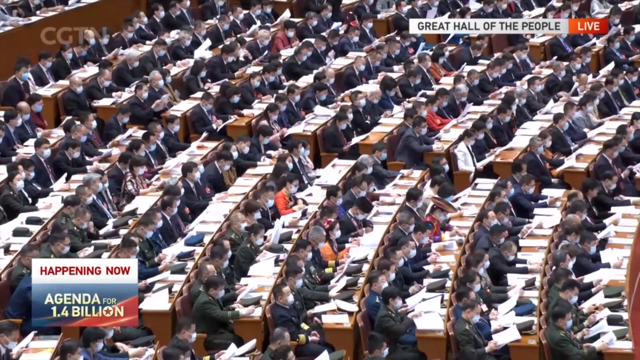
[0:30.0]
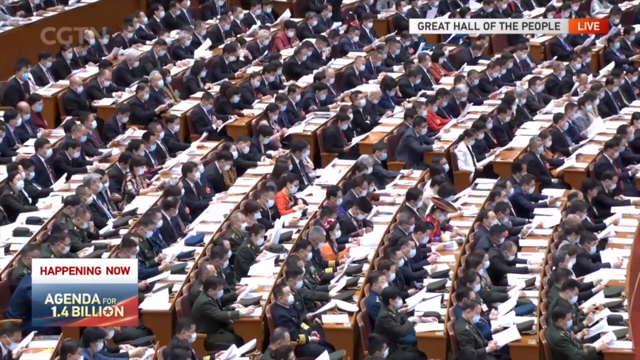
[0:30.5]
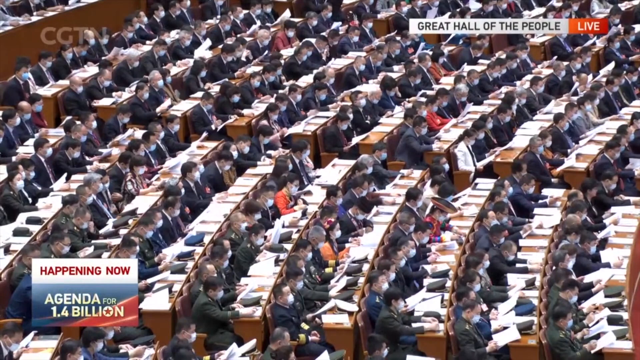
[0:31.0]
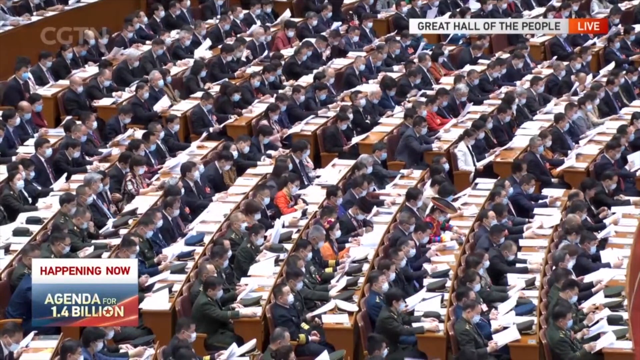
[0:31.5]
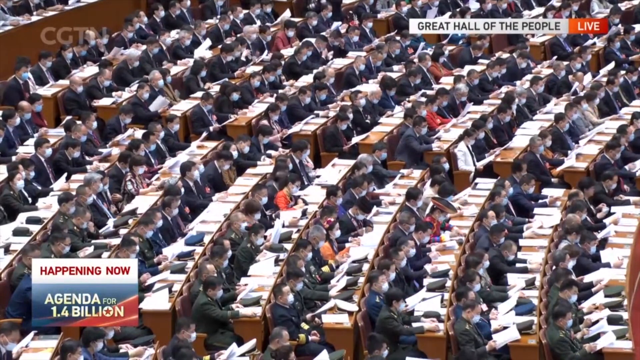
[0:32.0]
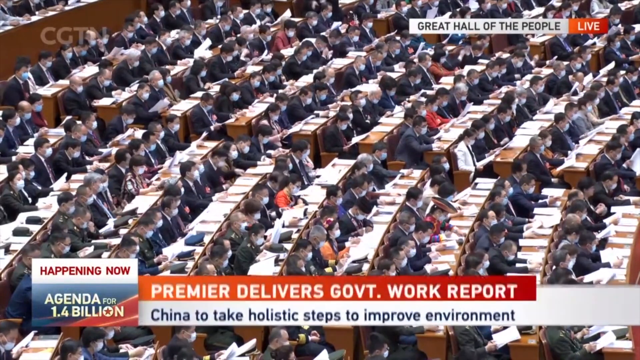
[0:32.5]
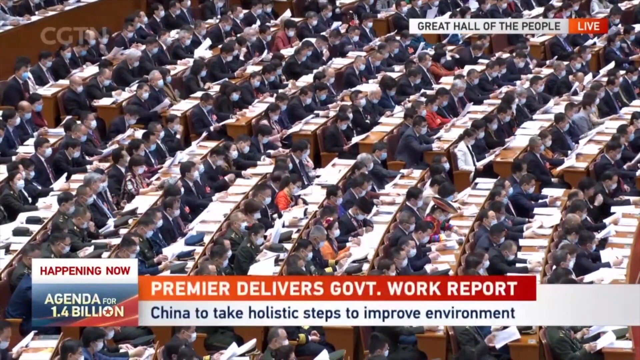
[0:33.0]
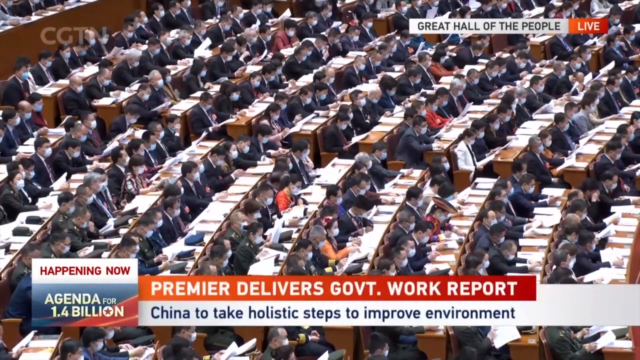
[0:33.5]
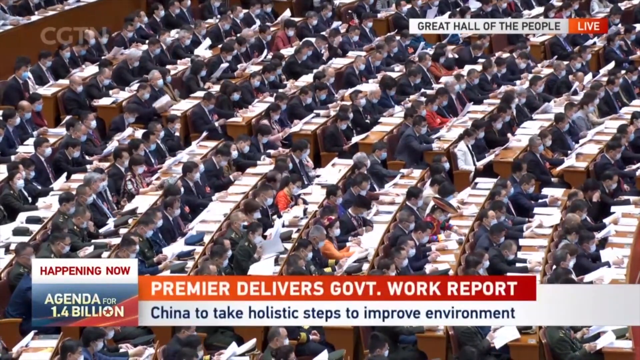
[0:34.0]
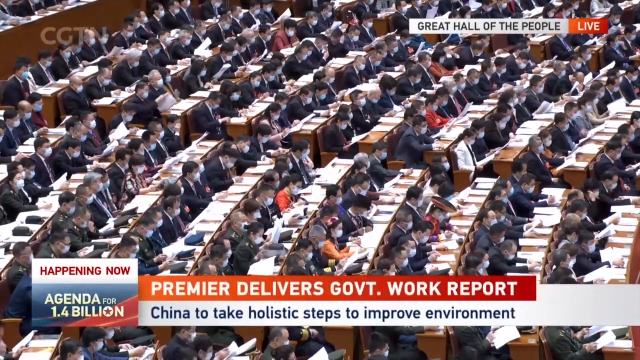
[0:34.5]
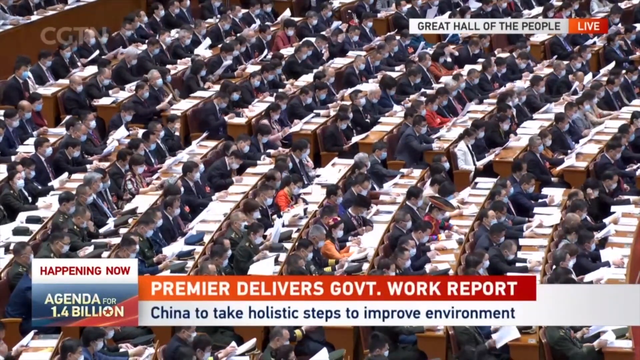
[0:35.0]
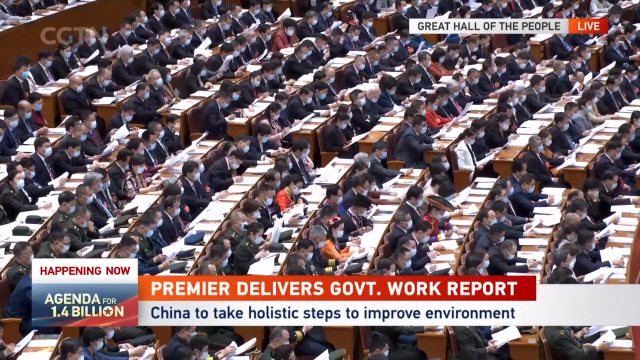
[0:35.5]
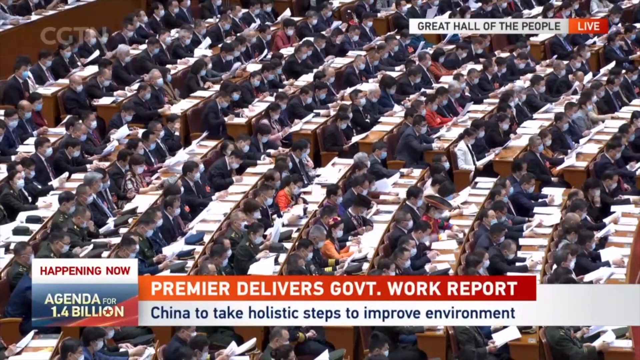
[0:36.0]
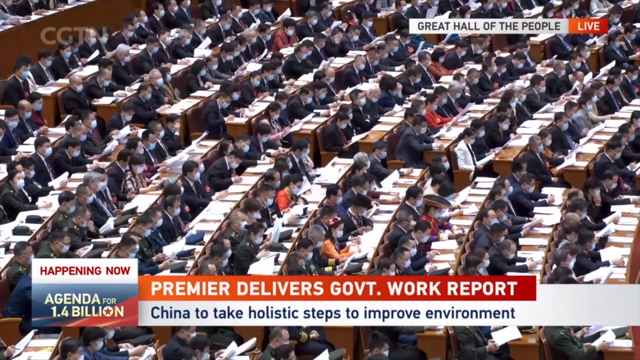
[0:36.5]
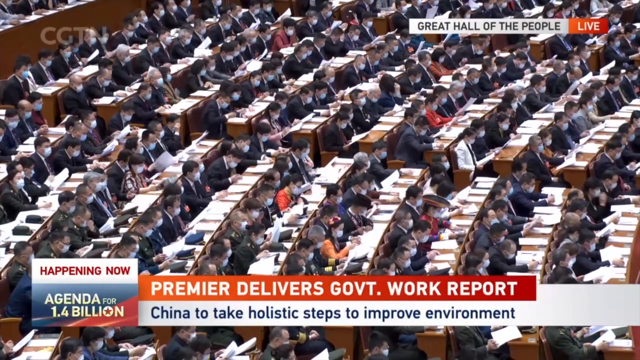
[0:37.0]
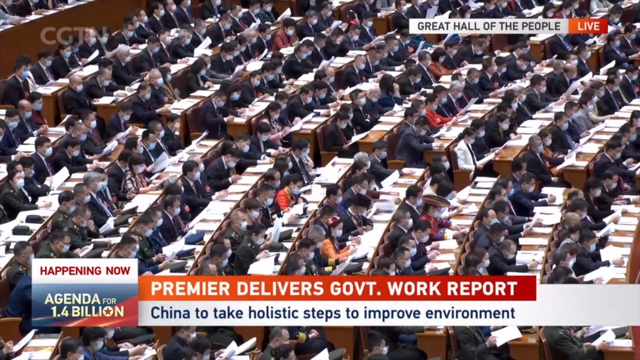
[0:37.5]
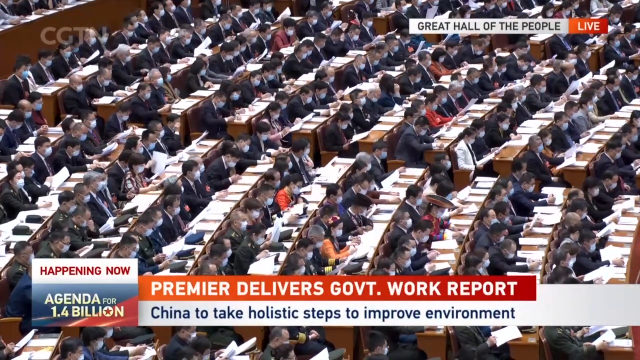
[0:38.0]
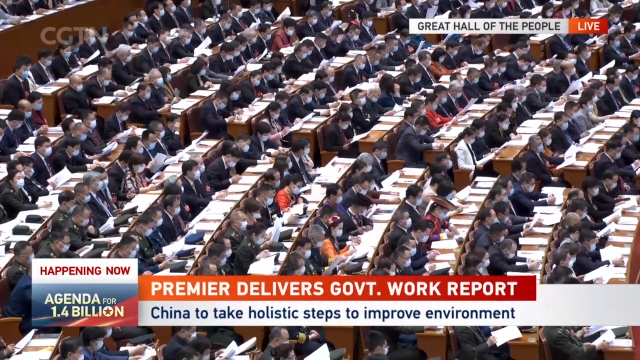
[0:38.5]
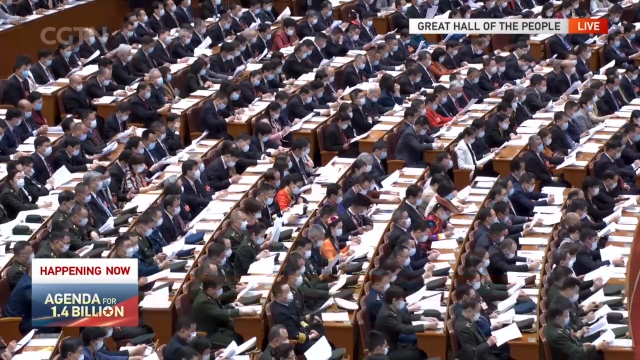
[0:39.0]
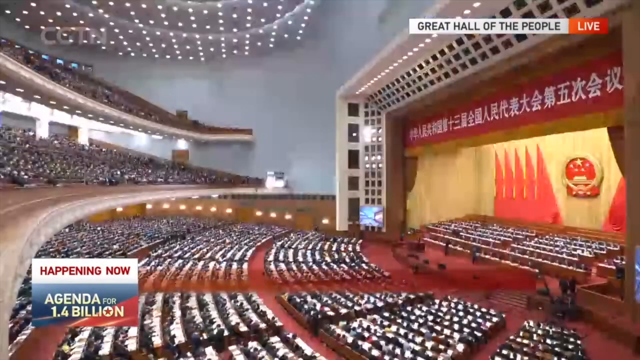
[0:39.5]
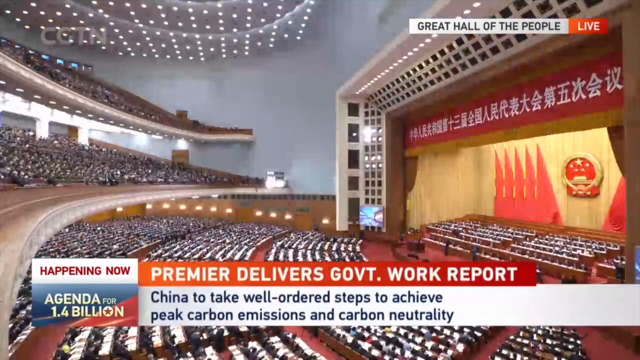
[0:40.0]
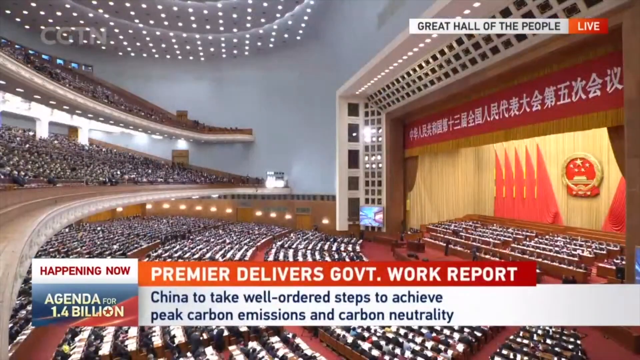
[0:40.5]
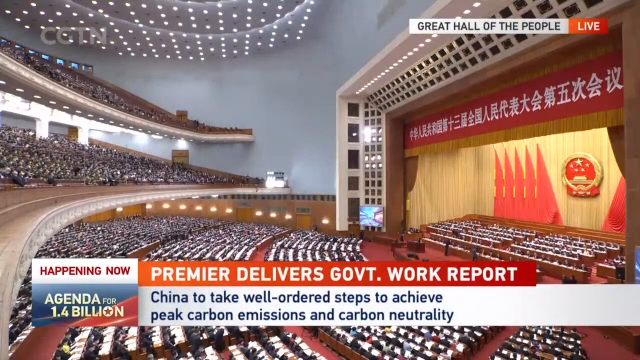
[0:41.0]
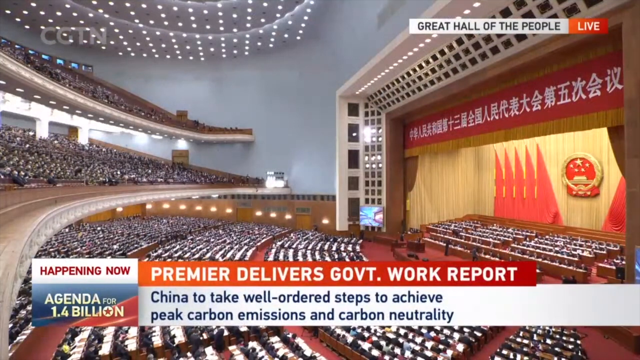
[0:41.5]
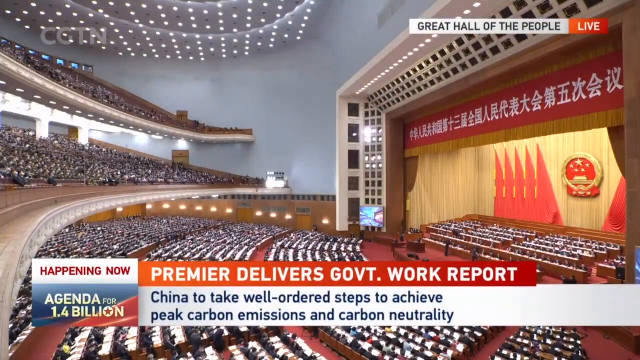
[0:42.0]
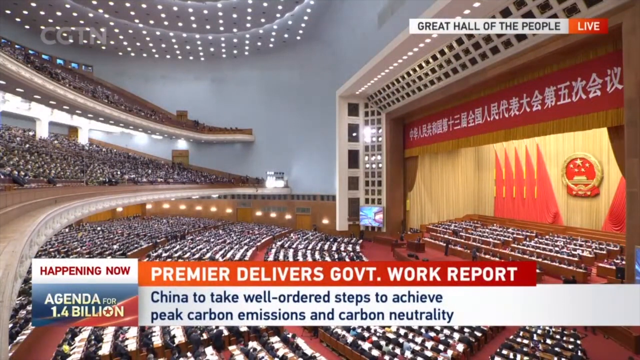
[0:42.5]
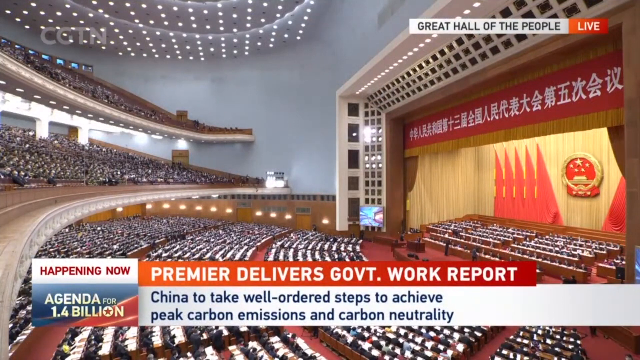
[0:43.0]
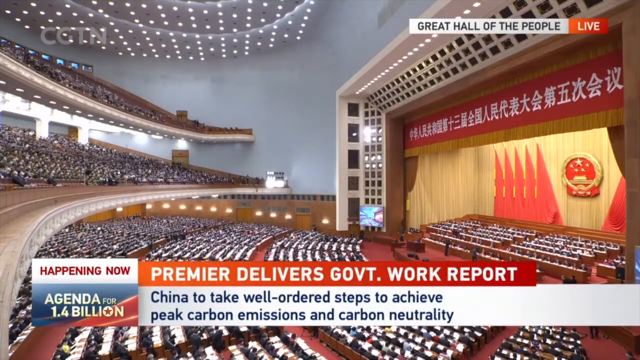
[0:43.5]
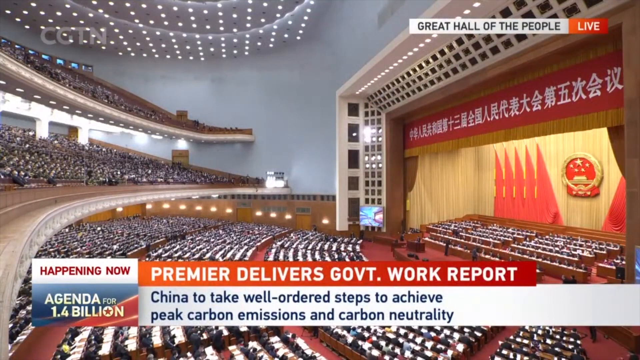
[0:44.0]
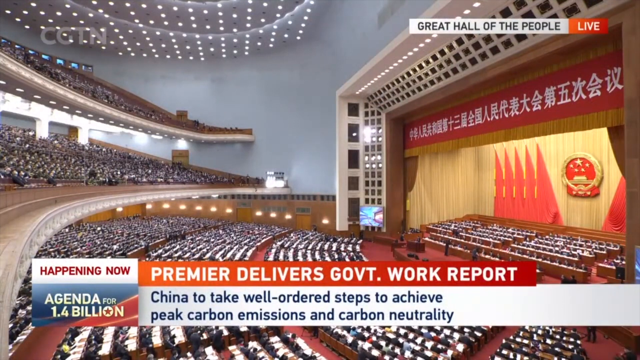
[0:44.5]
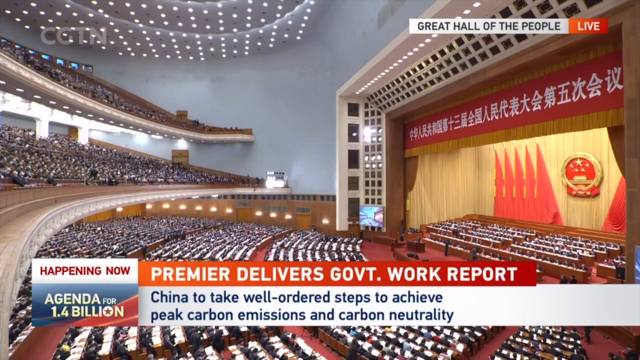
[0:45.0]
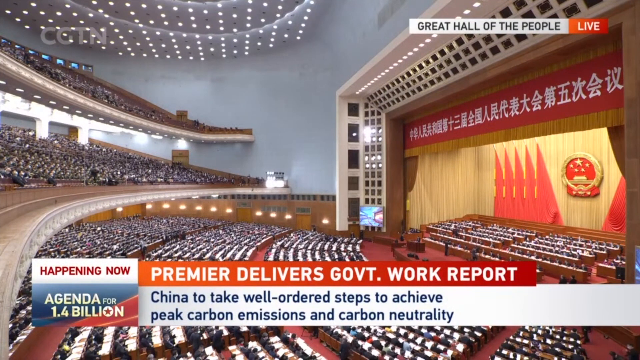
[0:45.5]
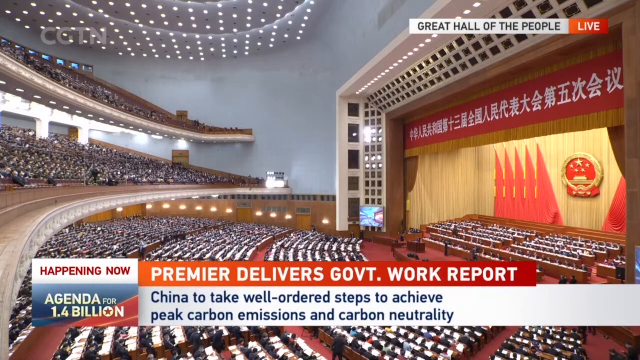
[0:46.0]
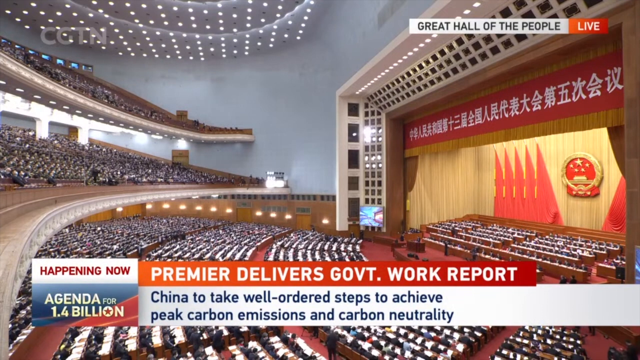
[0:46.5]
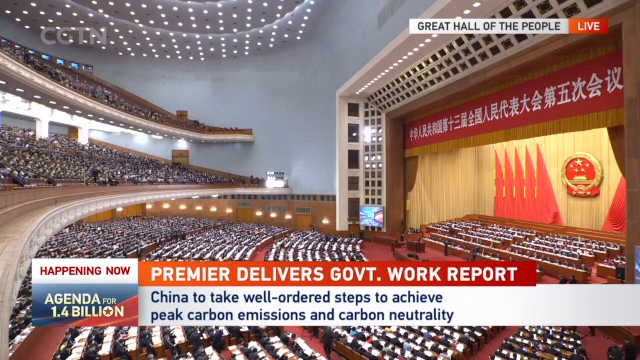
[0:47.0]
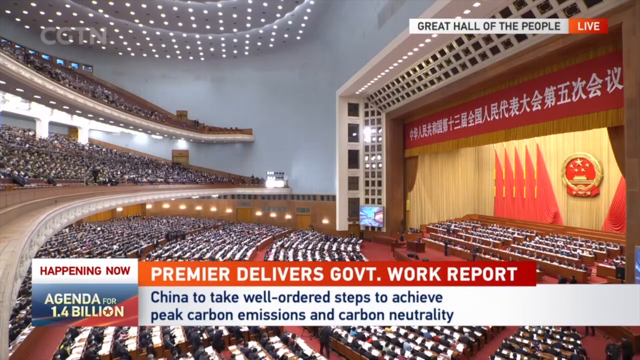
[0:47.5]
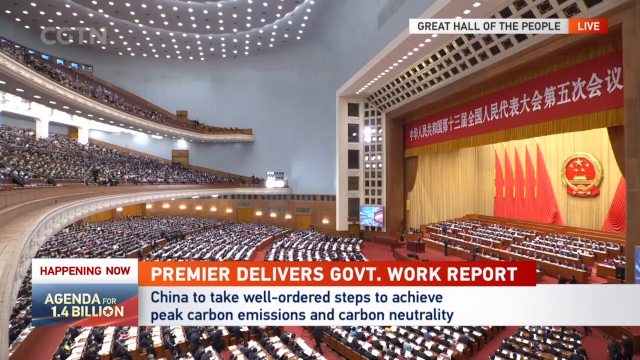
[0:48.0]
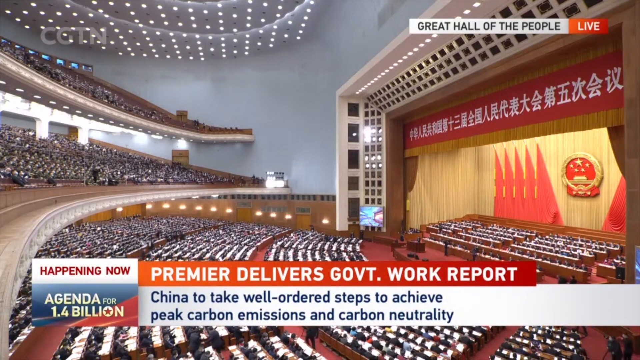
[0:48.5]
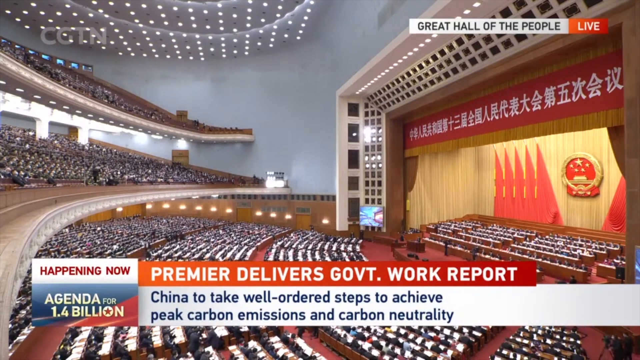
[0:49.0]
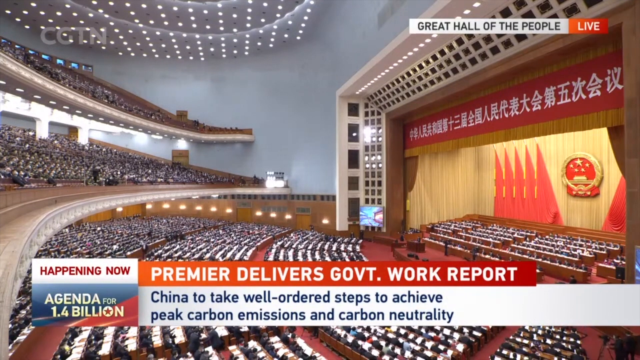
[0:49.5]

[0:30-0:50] From this angle, people are flipping through the papers on their desks in a flurry. A banner at the bottom of the screen says "Premier delivers government work report, China to take holistic steps to improve environment." A side view of the room then shows the rows of desks seen at first, plus two more balcony rows absolutely full of people. On the right side is what kind of looks like a stage with a banner over the top of it, and there are several rows so far away that it is hard to tell whether people are sitting there or exactly what the setup is. A new banner at the bottom says "China to take well ordered steps to achieve peak carbon emissions and carbon neutrality."